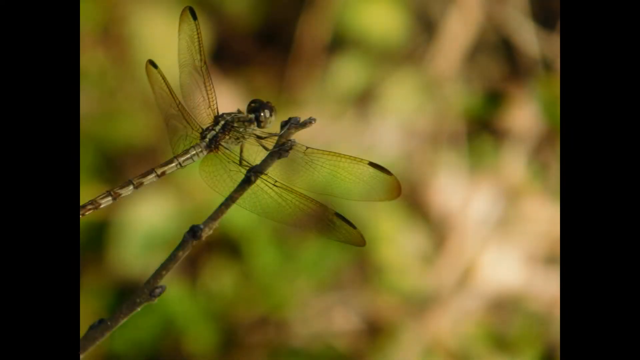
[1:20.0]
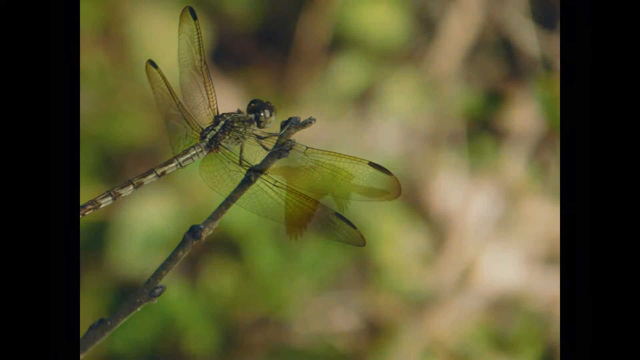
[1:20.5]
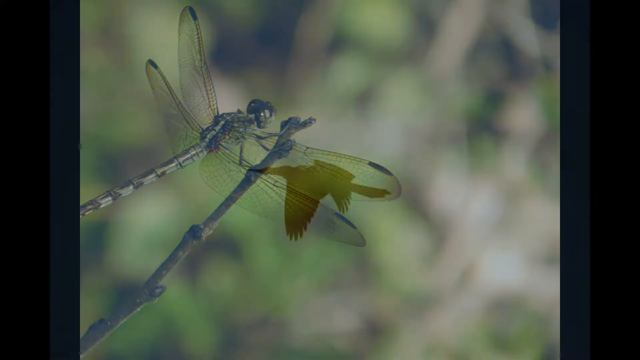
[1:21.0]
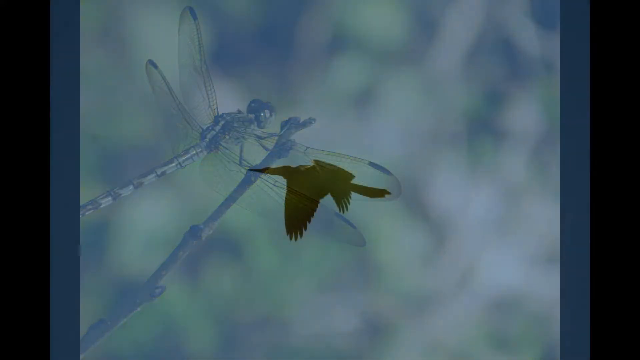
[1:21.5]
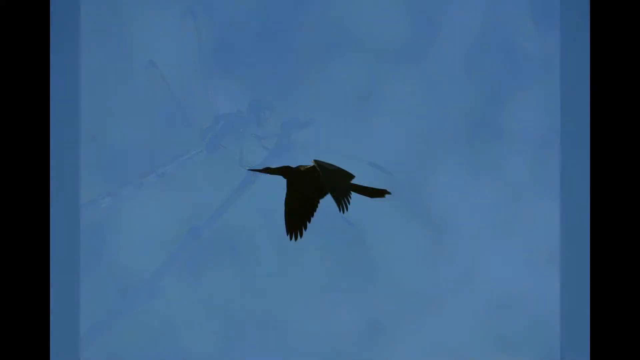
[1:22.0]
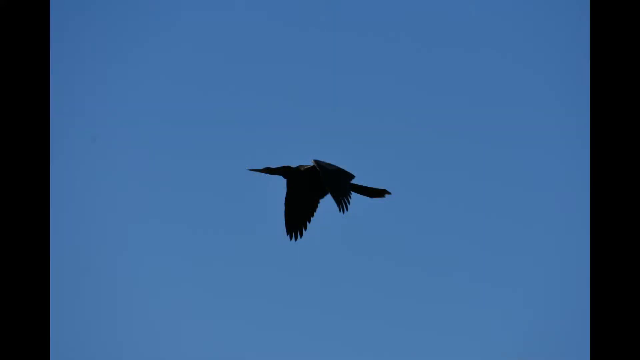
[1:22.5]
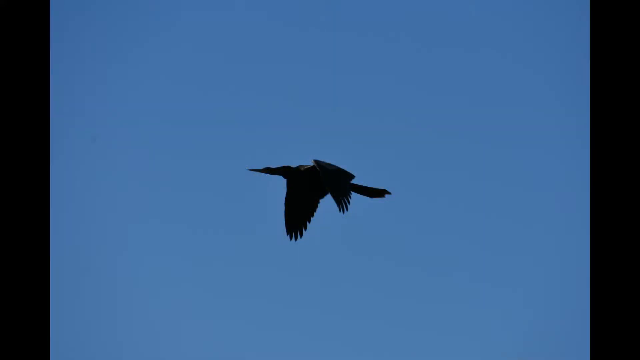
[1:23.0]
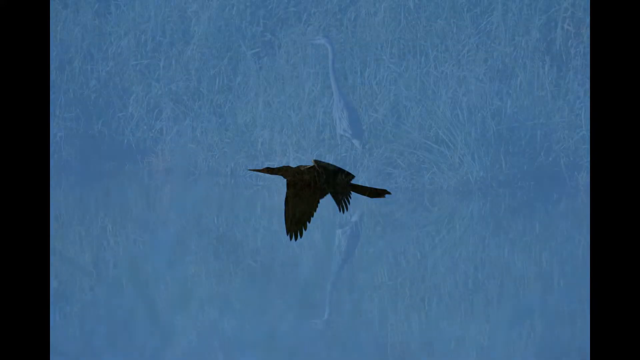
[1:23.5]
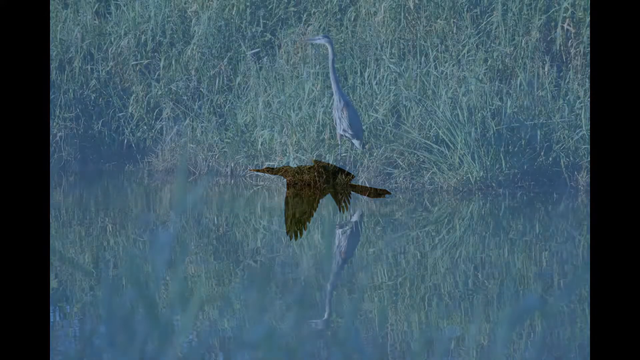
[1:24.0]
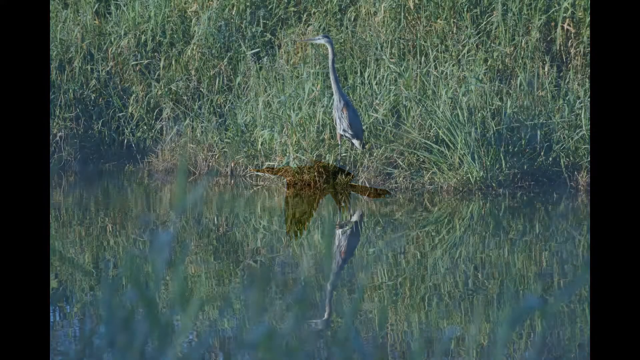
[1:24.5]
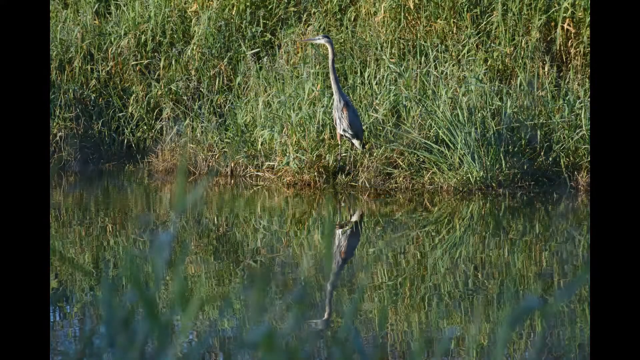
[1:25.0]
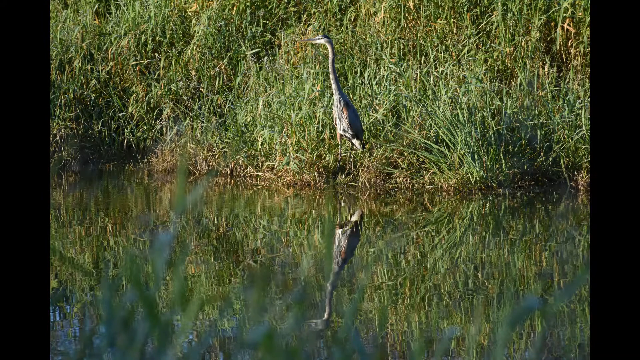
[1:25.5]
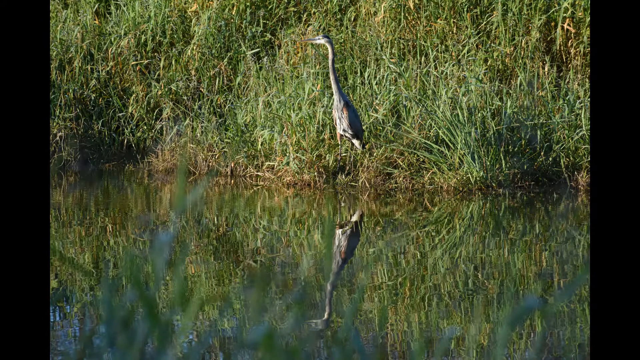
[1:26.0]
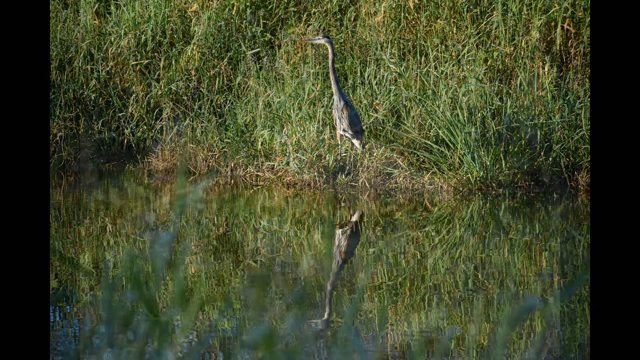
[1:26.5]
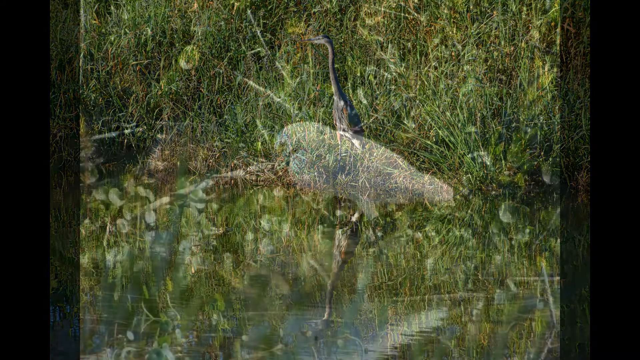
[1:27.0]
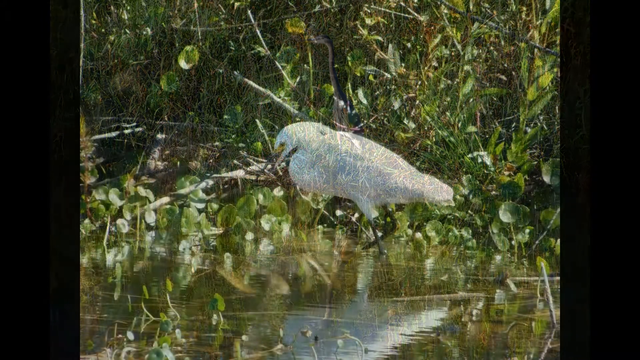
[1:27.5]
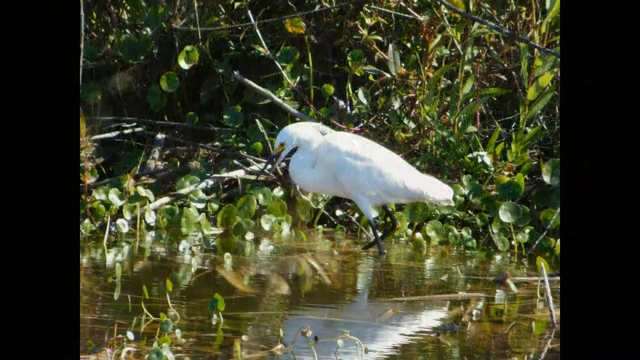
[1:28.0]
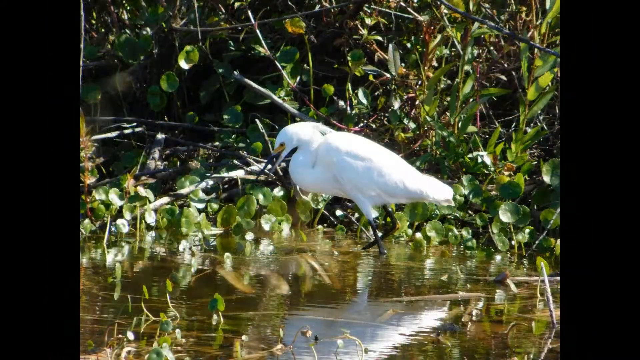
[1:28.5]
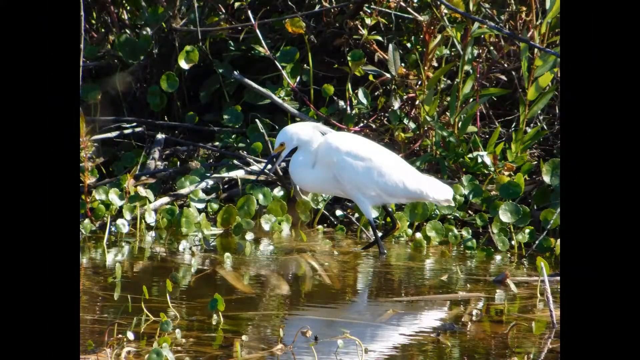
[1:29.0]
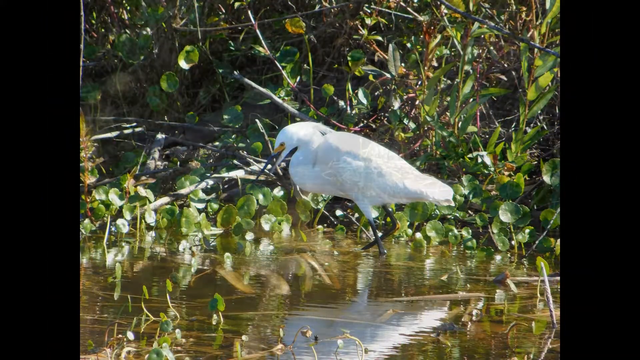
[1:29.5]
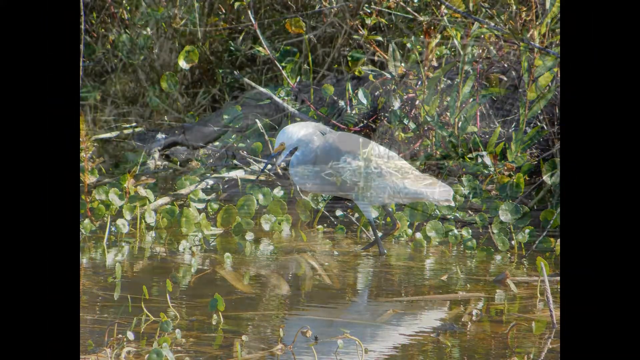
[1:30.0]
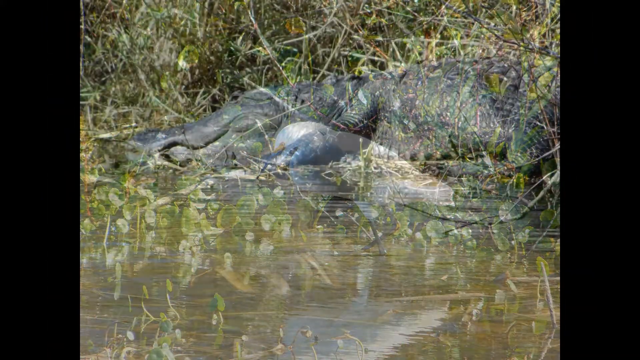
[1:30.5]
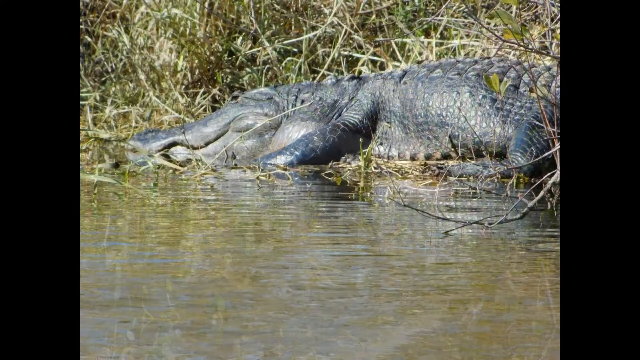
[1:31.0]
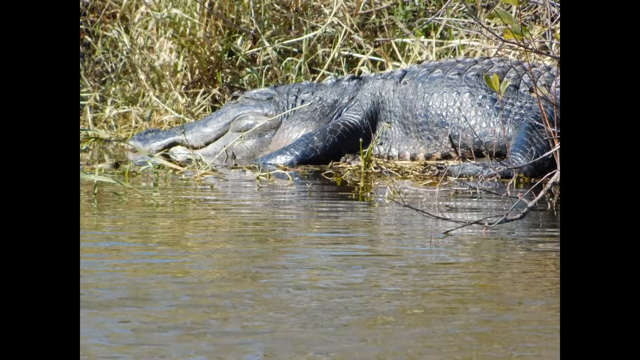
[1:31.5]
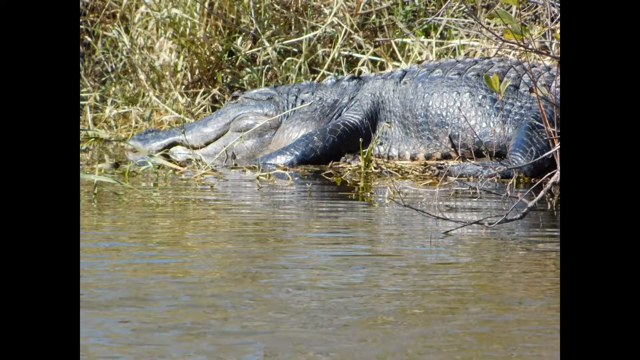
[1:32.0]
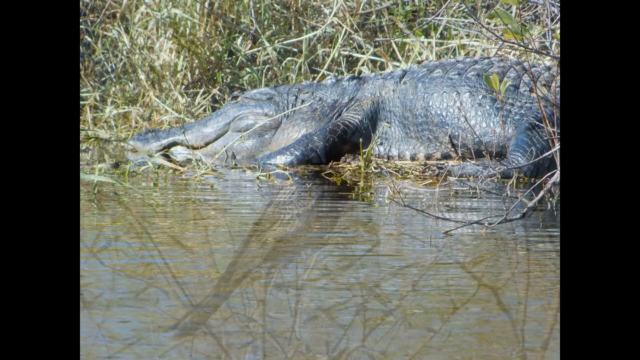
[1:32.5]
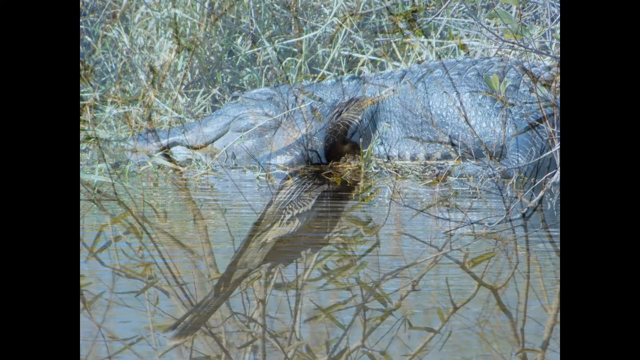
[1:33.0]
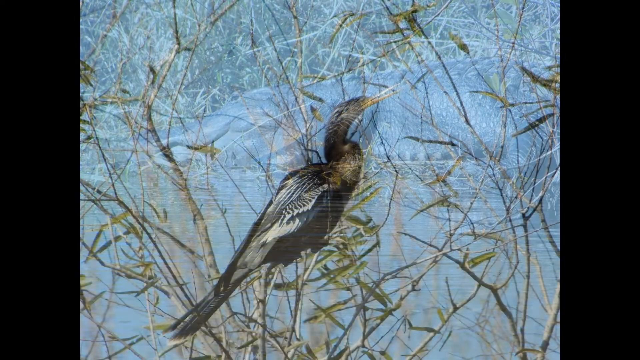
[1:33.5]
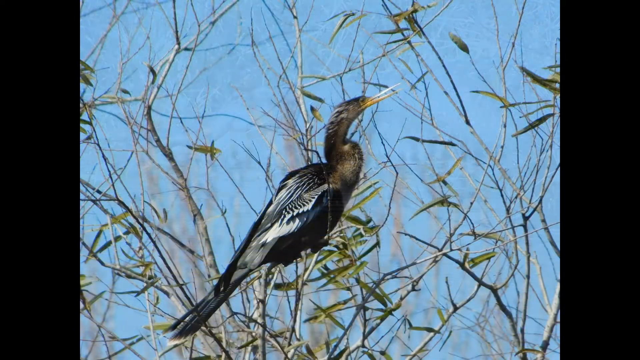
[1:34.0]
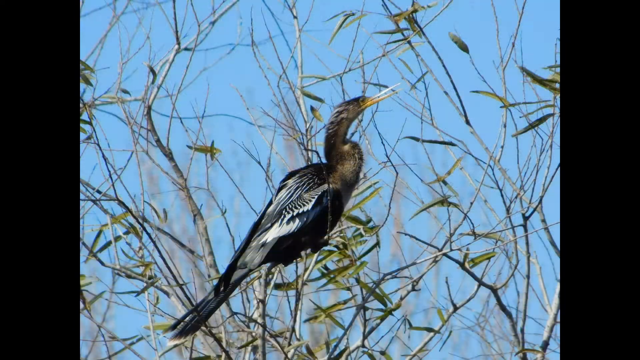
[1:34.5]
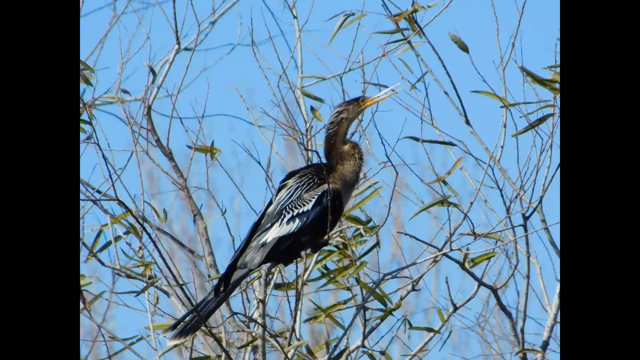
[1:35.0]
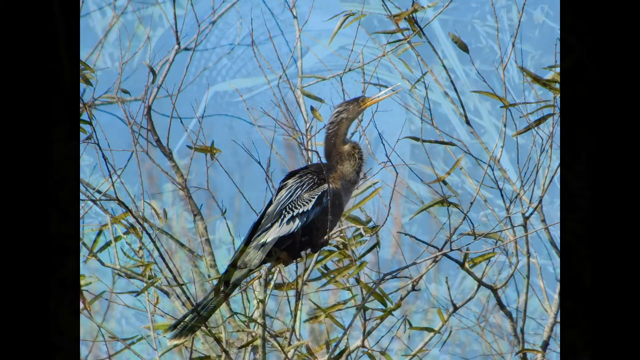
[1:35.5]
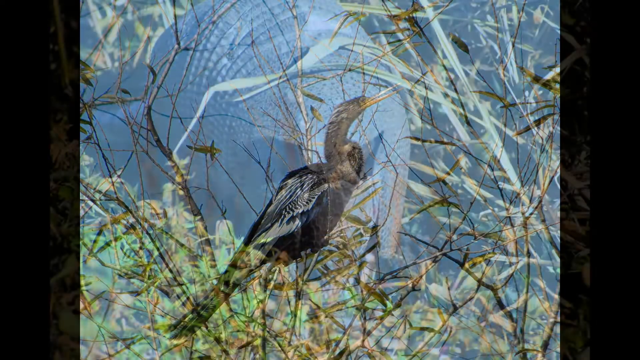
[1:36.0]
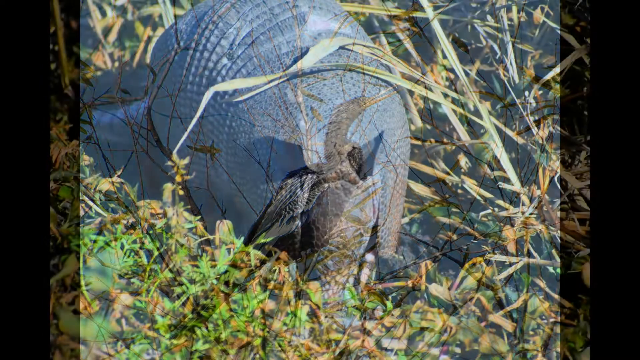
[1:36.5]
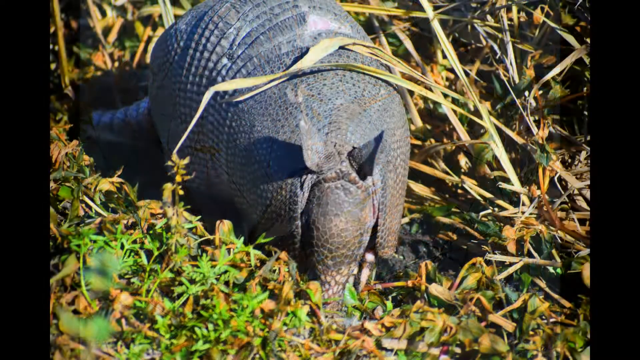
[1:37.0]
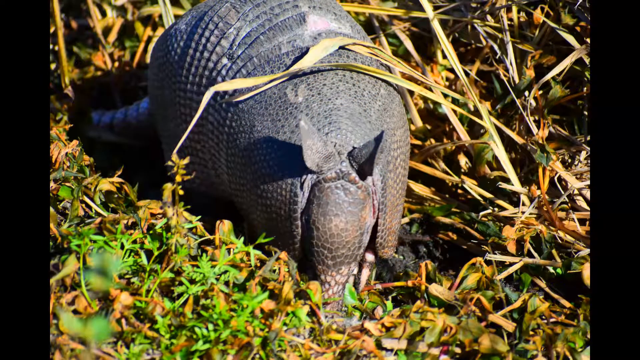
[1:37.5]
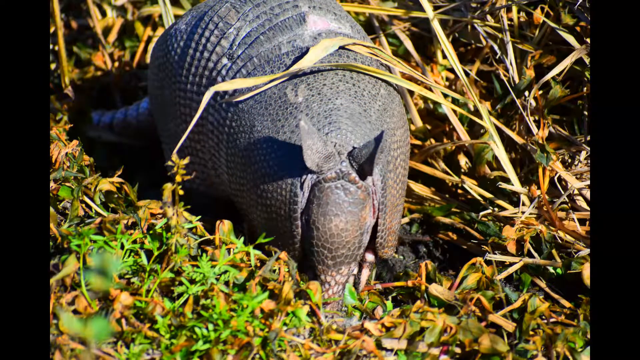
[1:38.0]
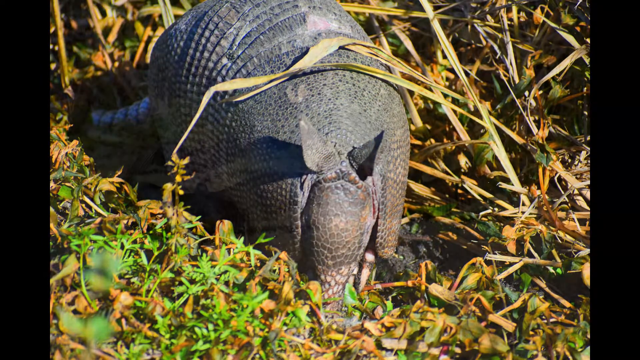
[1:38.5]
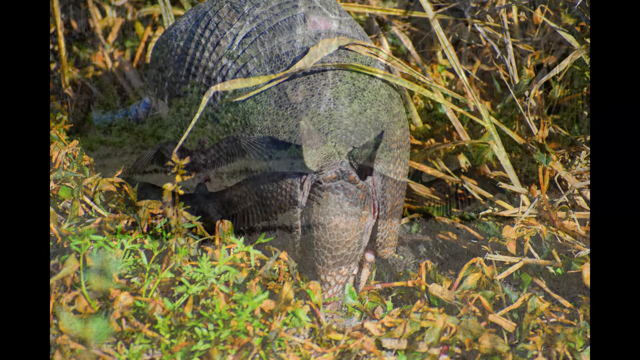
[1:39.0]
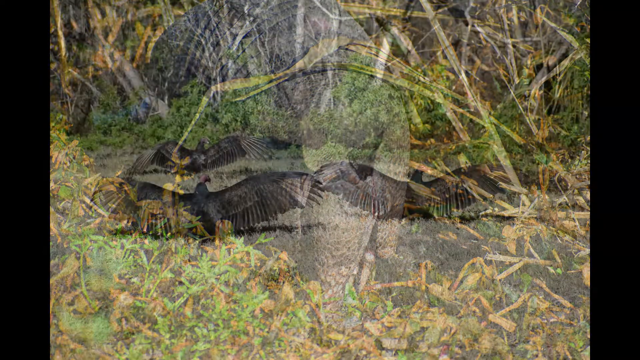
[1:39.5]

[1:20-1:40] A photo shows a dragonfly with almost translucent wings against a blurry brown and green background. Next is a bird mid-flight against a bright blue sky, then a crane stalking through the water at the edge of the land. A white bird with a long beak that has a little orange on it walks through marshy water. A large alligator or crocodile lies in the water among the grasses. A bird is perched in the trees against a bright blue sky. Next is an armadillo with little ears and leathery skin, then three large birds with their wings spread while still standing on the ground, then a bird's silhouette flying across a bright blue sky. The images move very rapidly, and the image of the crane stalking through the water follows.